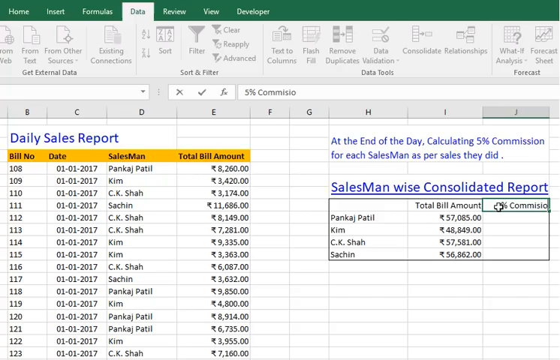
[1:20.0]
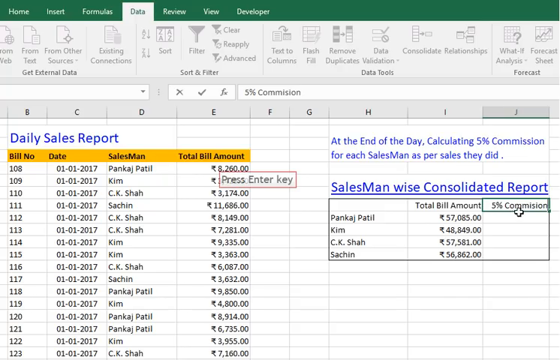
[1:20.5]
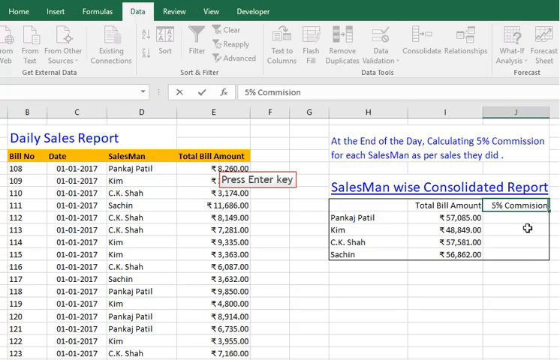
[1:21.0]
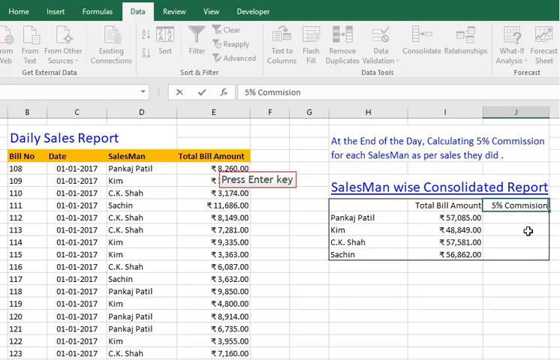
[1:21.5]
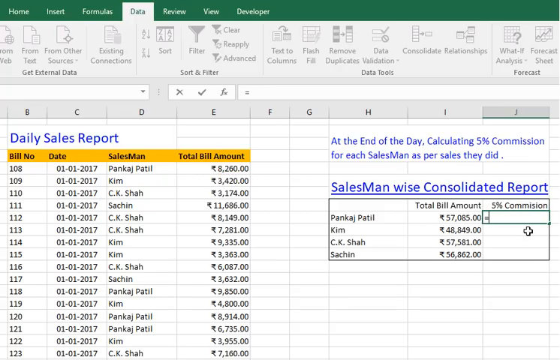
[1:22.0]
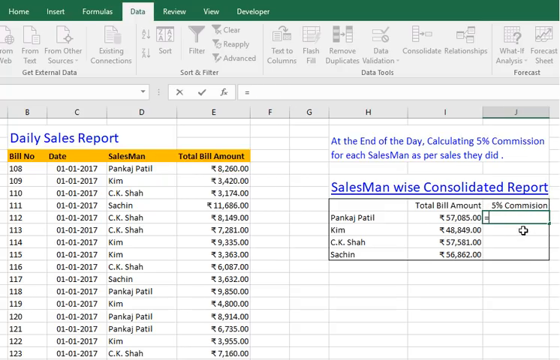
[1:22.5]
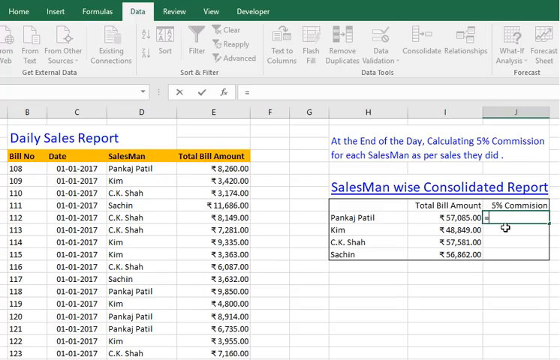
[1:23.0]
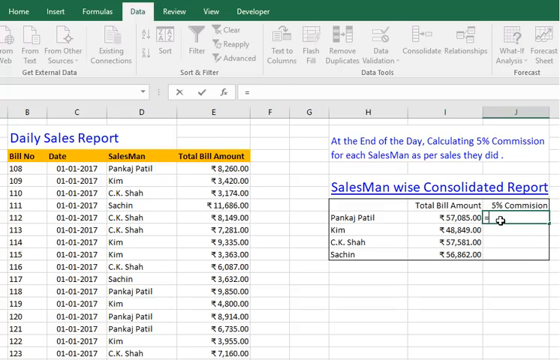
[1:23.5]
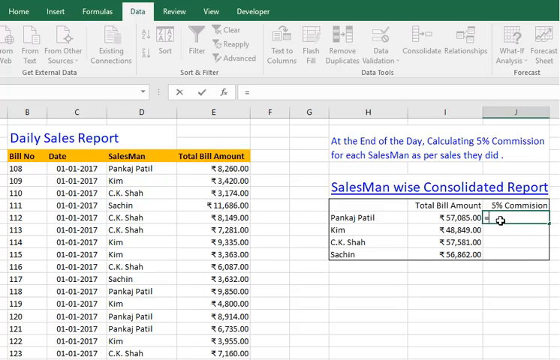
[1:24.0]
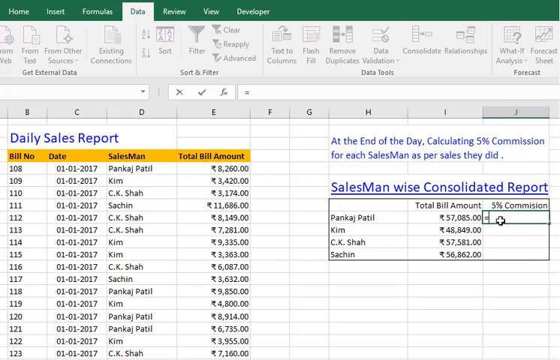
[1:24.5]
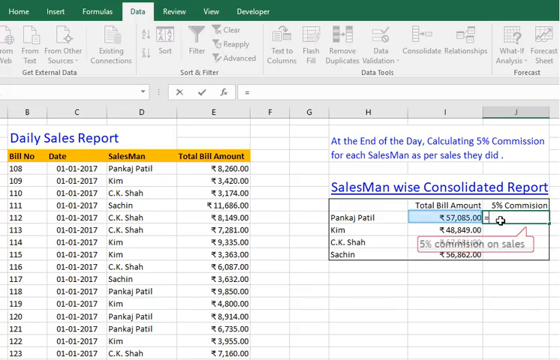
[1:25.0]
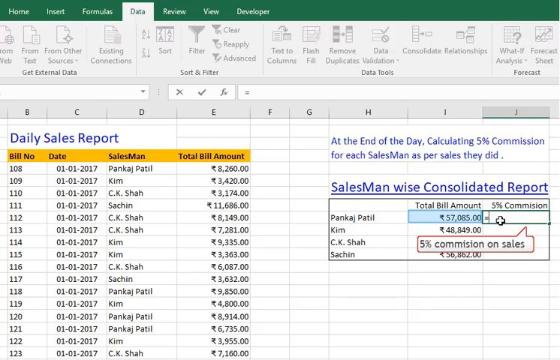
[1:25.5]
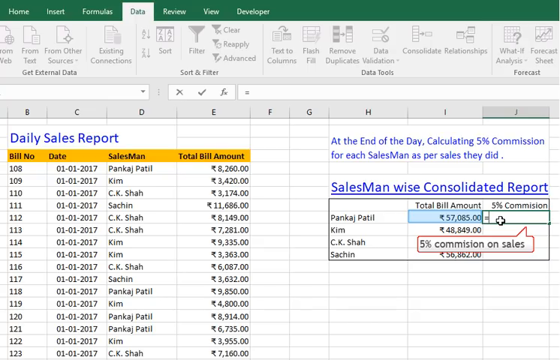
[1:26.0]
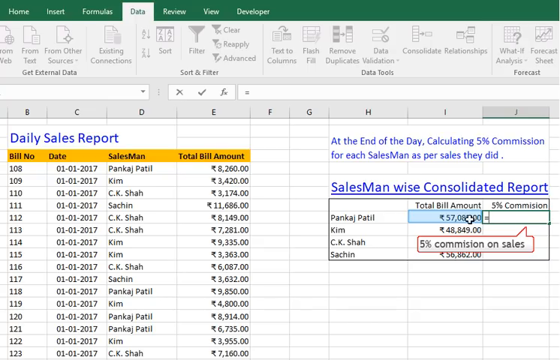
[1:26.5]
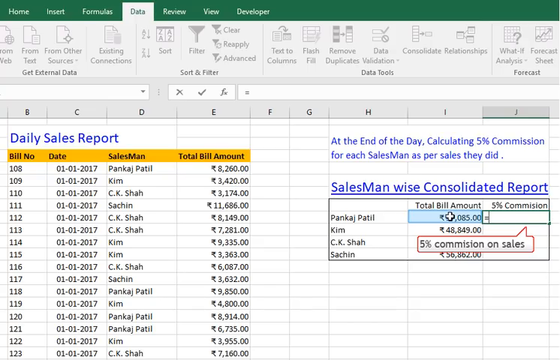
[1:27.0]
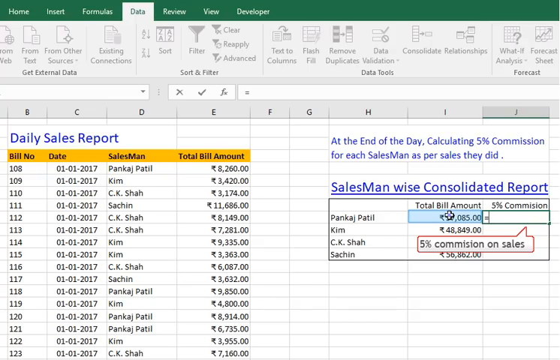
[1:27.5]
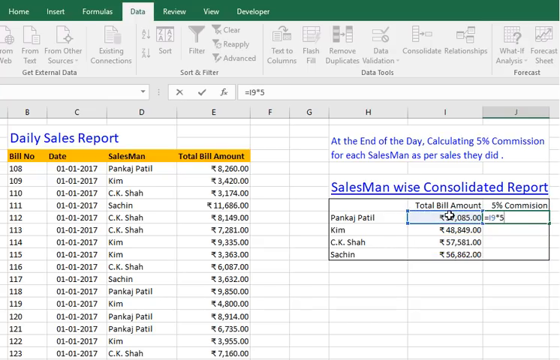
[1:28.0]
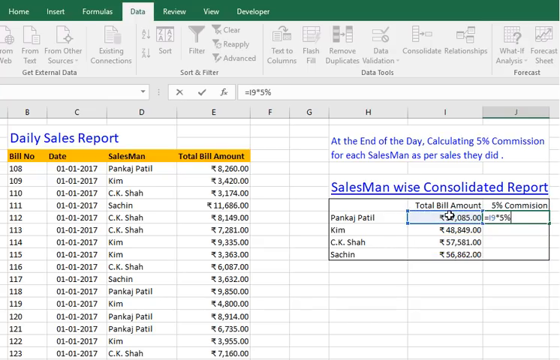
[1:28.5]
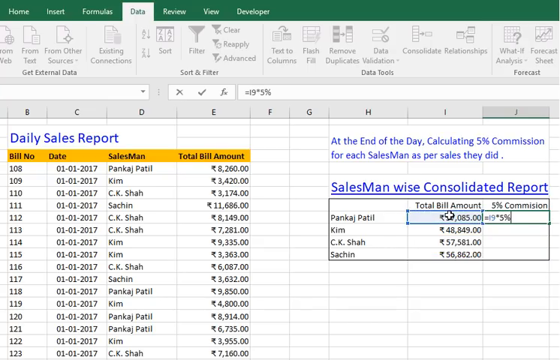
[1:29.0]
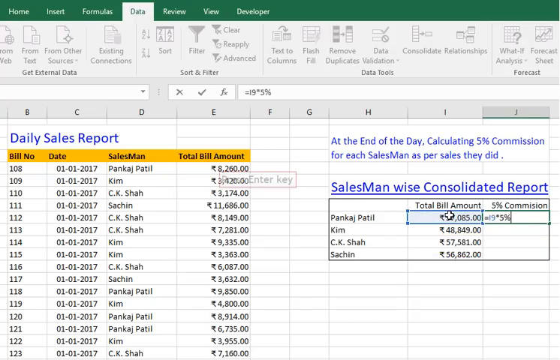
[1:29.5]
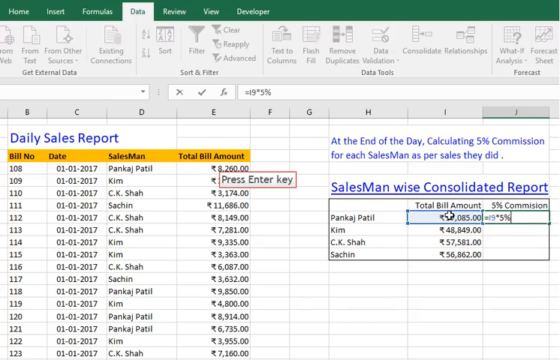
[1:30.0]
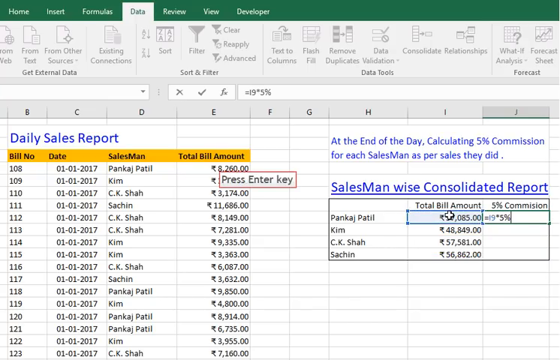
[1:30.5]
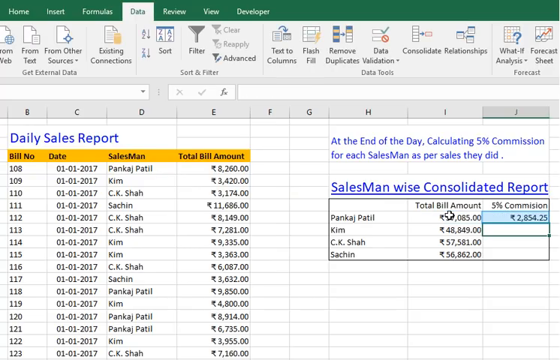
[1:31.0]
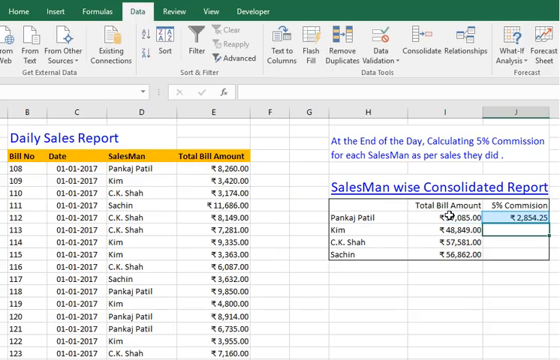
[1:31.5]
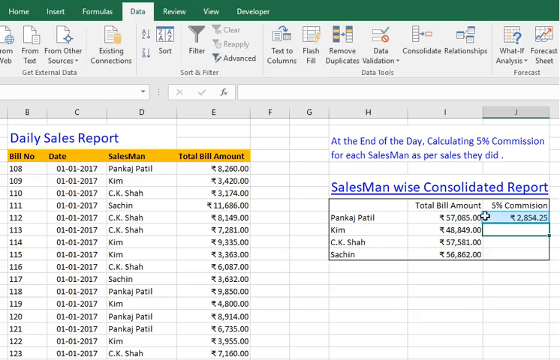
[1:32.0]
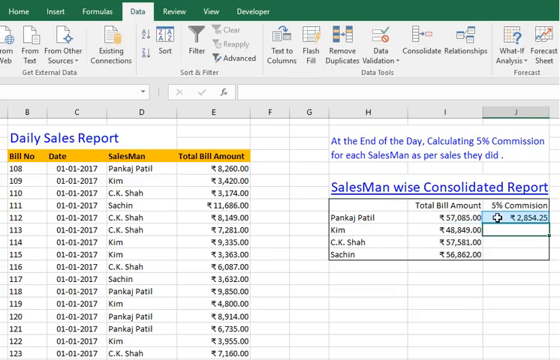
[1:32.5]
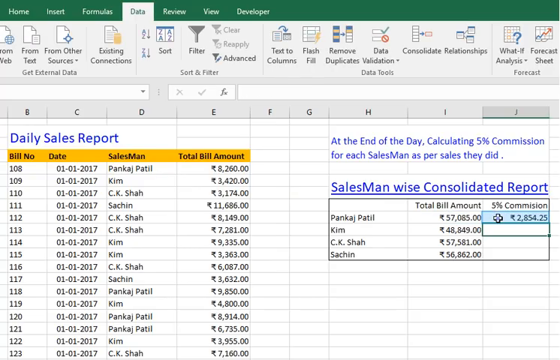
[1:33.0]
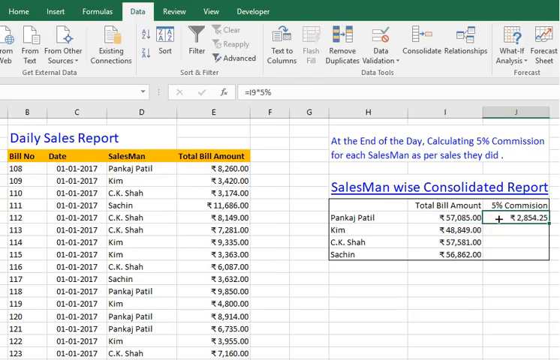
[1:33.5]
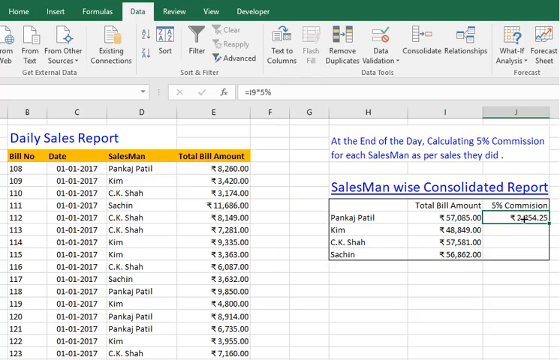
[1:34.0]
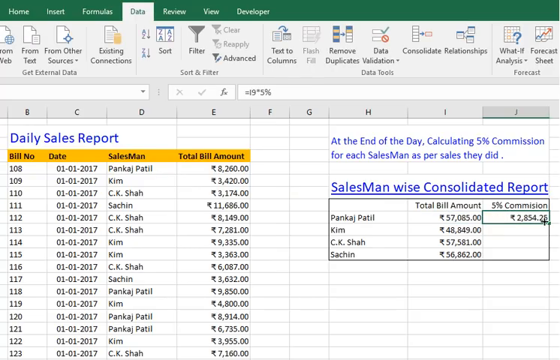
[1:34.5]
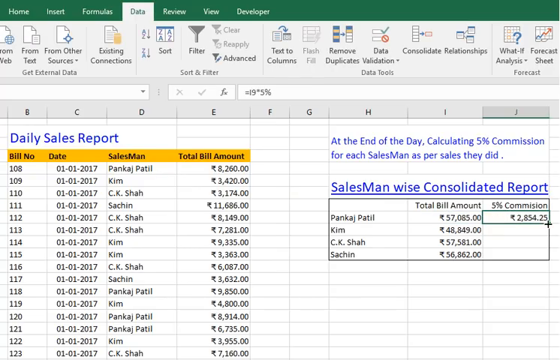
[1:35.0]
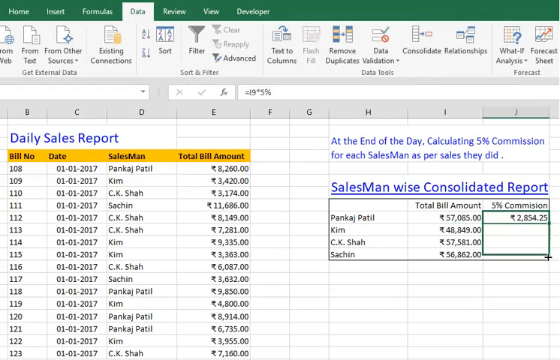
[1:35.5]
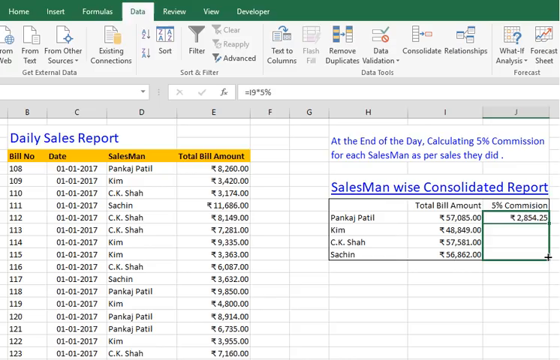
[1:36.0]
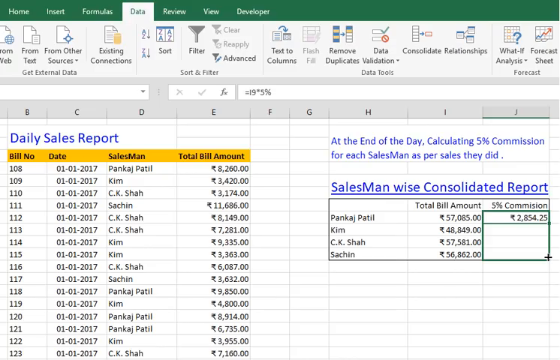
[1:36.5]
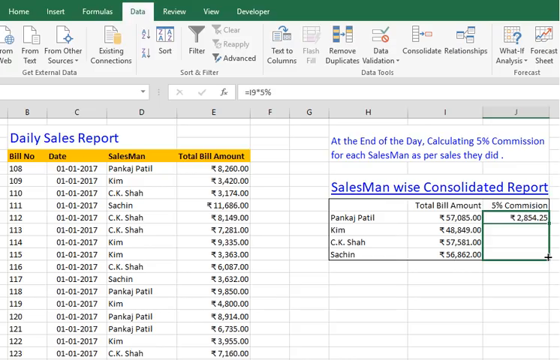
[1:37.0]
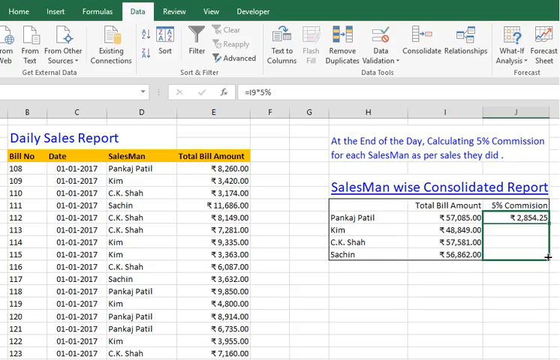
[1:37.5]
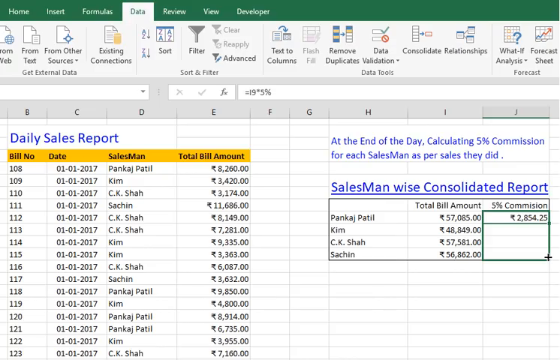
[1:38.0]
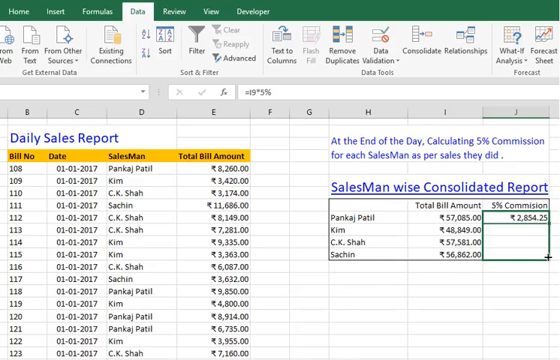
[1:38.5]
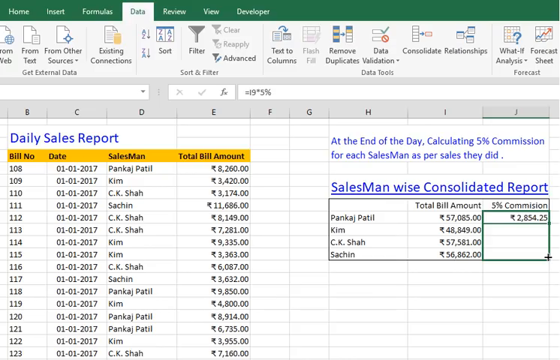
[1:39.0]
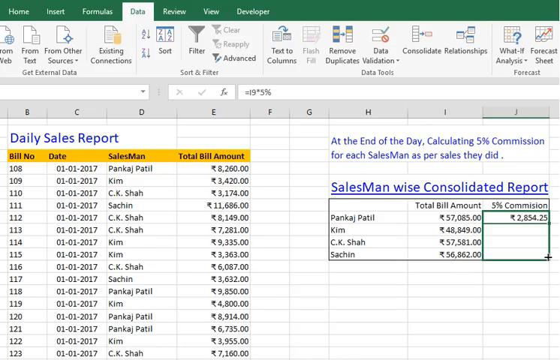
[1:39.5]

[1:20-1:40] The percentage to be used to calculate the amount for each person is shown: 5%. The salesman-wise consolidated report has been filled. Nothing changes; the setting stays the same, and the text on the screen is readable.